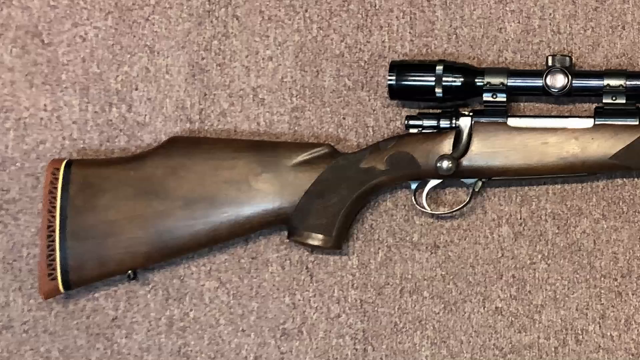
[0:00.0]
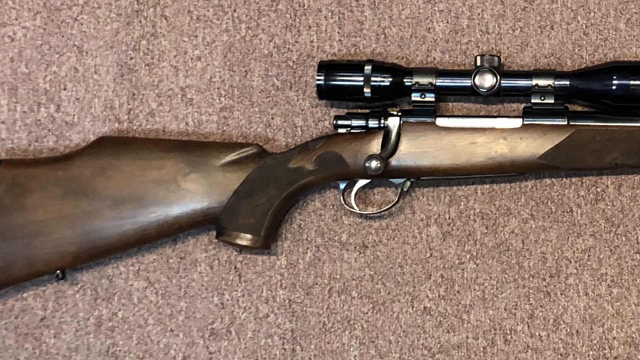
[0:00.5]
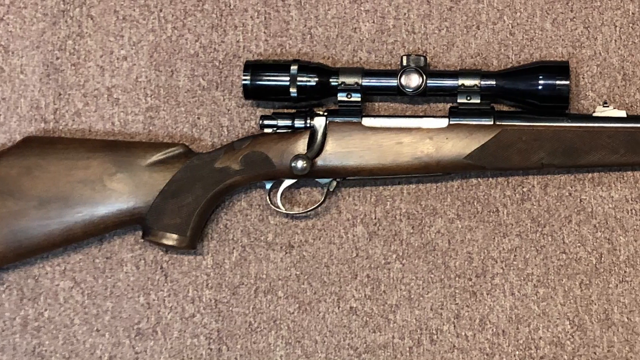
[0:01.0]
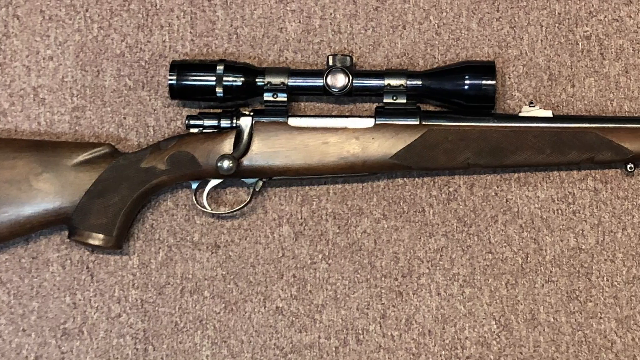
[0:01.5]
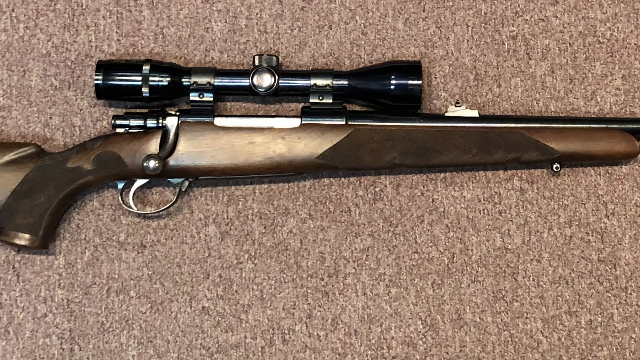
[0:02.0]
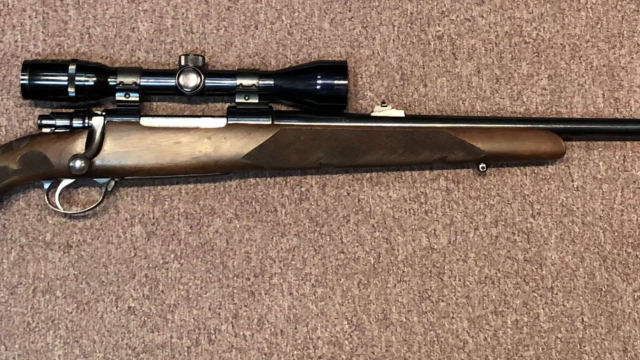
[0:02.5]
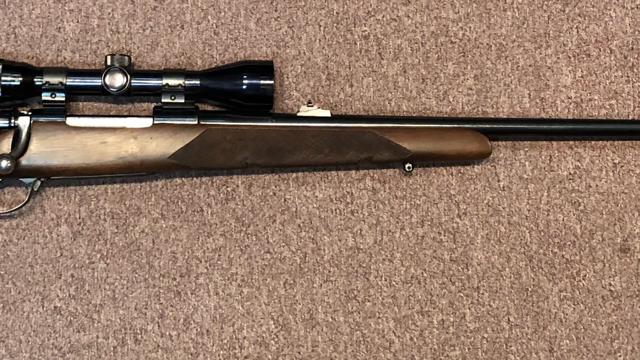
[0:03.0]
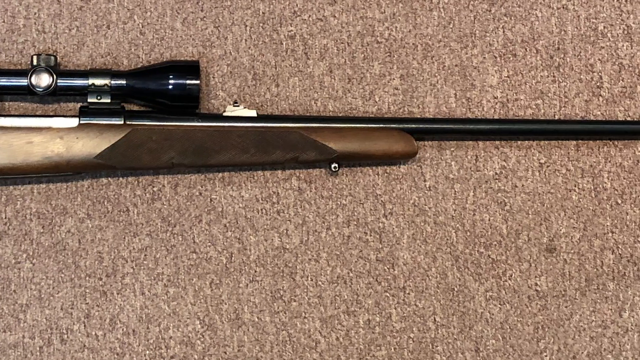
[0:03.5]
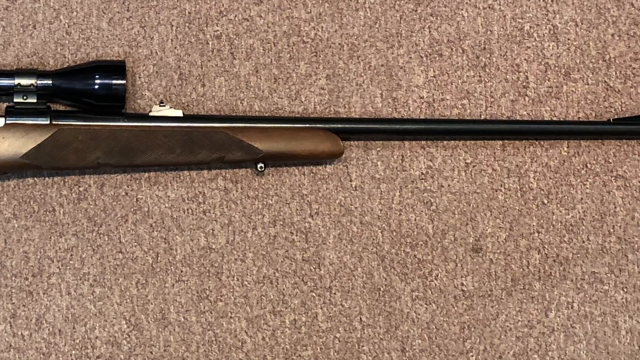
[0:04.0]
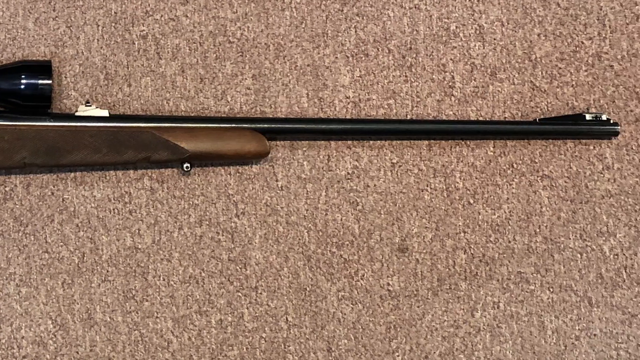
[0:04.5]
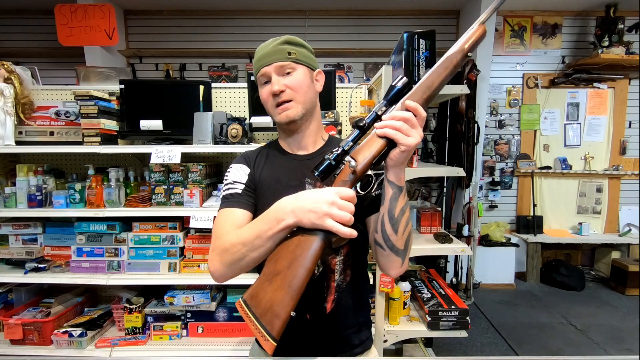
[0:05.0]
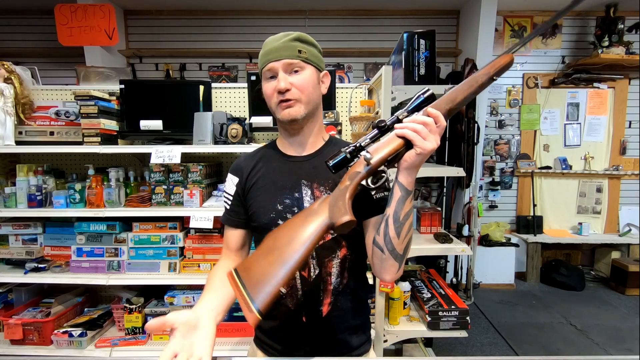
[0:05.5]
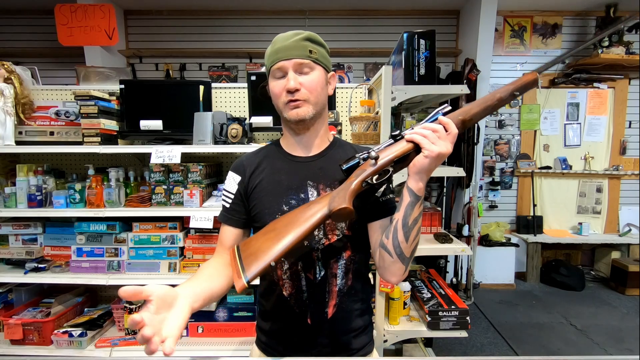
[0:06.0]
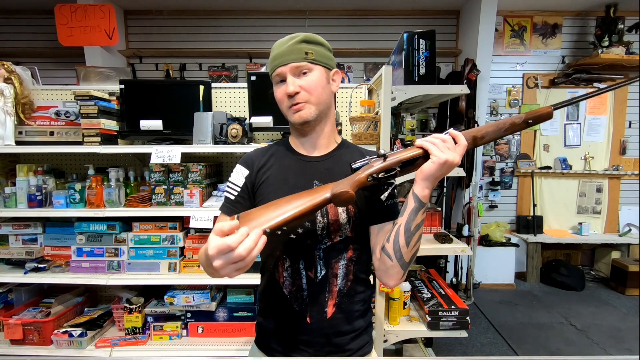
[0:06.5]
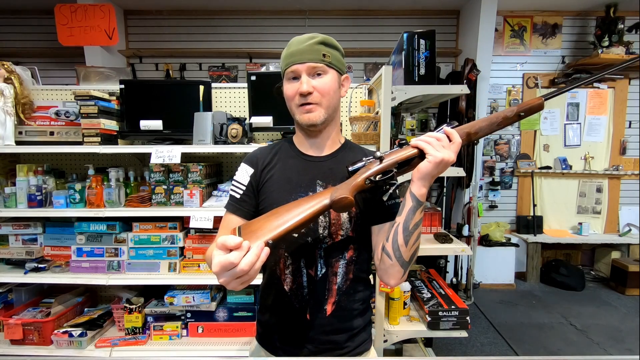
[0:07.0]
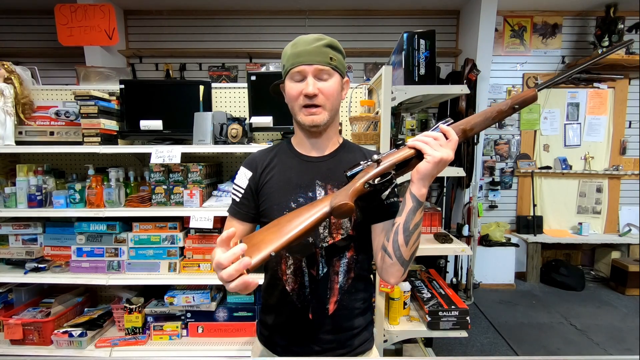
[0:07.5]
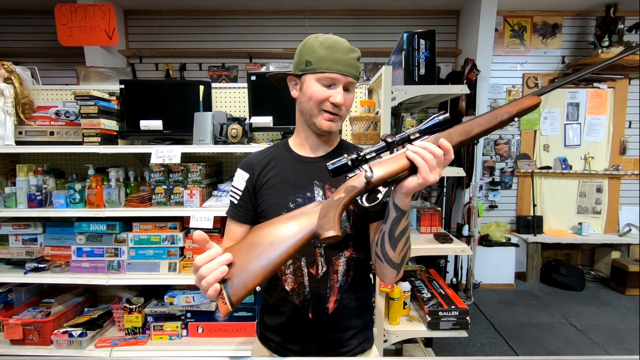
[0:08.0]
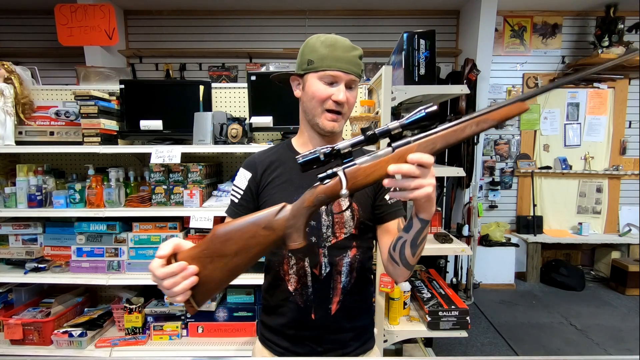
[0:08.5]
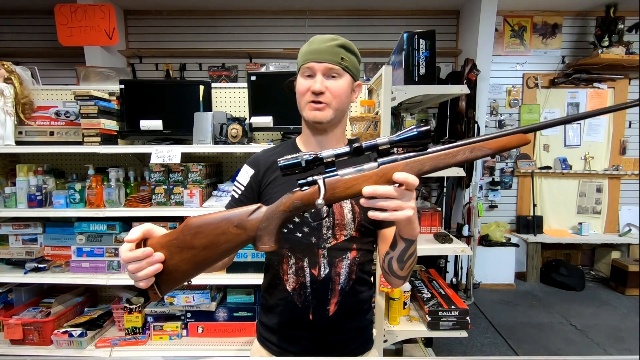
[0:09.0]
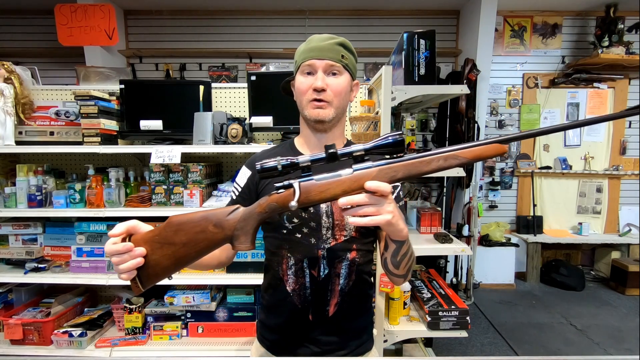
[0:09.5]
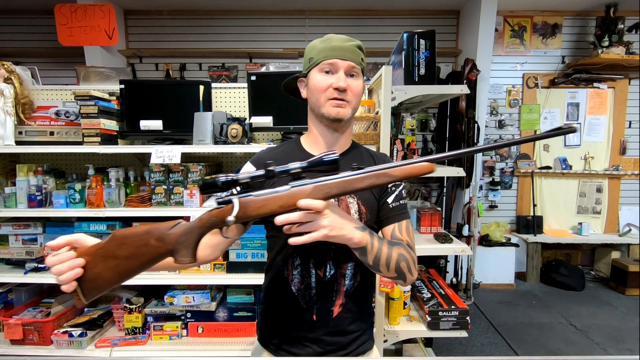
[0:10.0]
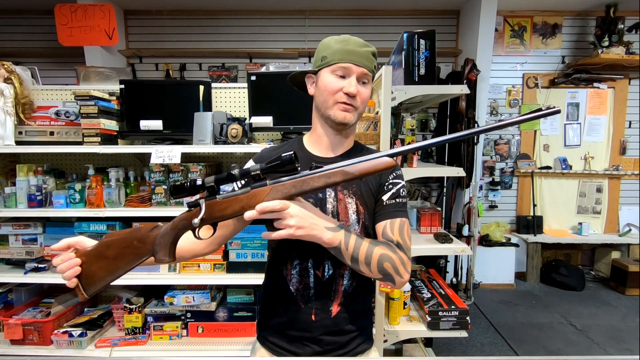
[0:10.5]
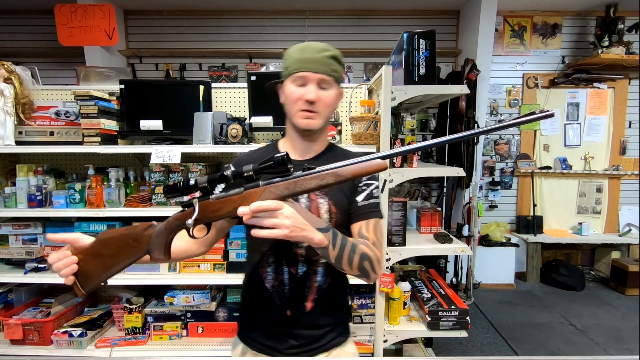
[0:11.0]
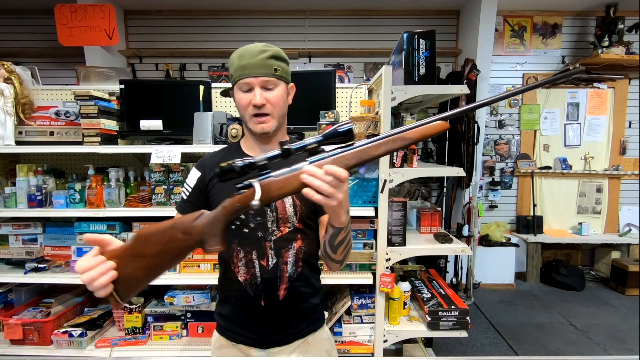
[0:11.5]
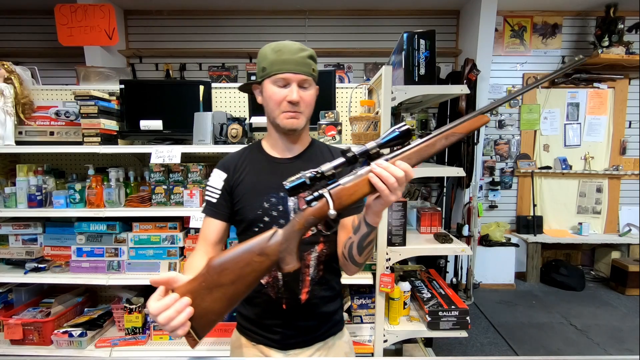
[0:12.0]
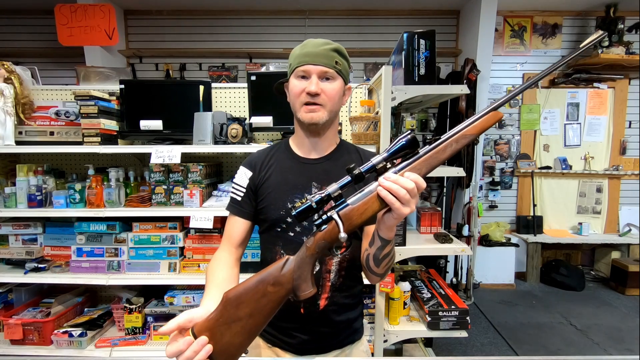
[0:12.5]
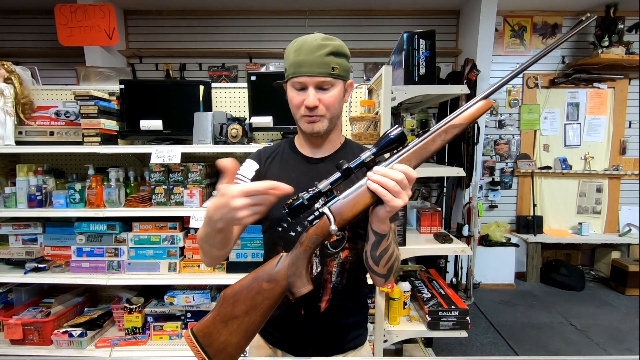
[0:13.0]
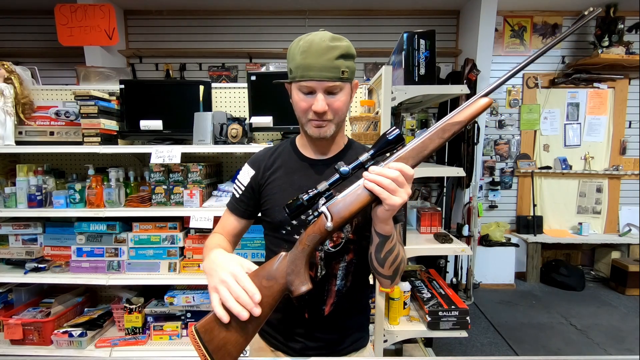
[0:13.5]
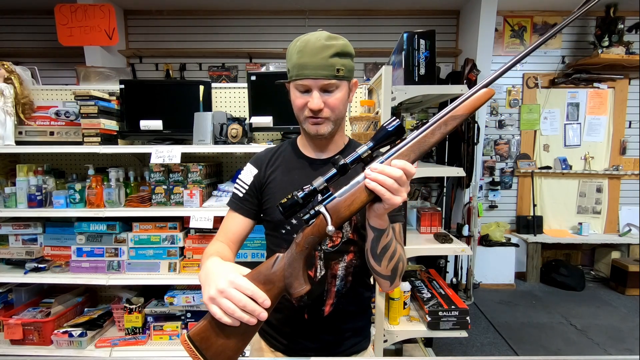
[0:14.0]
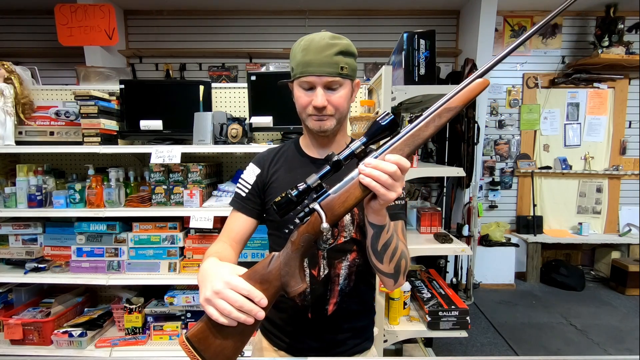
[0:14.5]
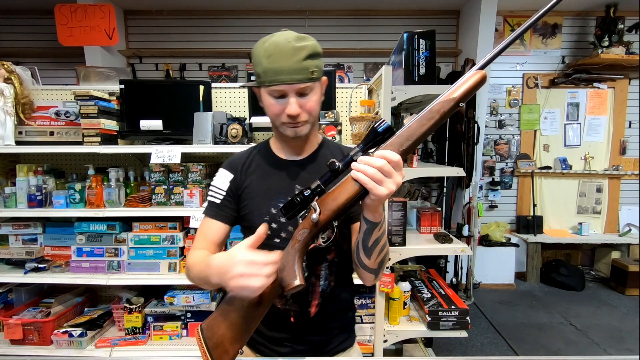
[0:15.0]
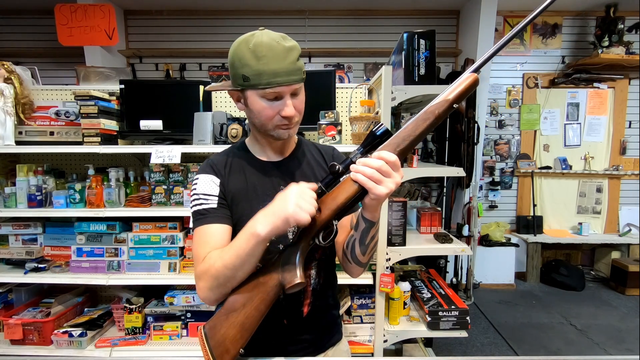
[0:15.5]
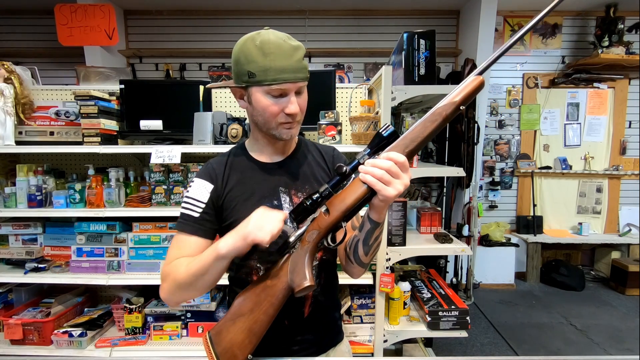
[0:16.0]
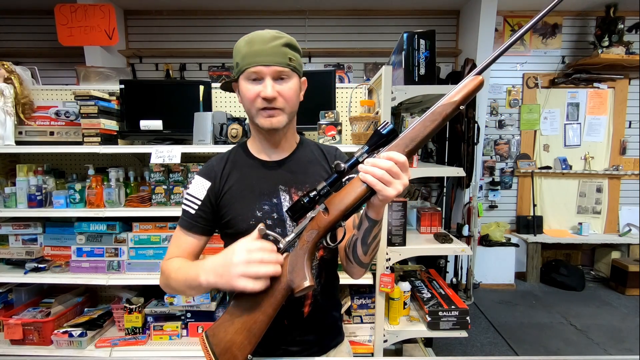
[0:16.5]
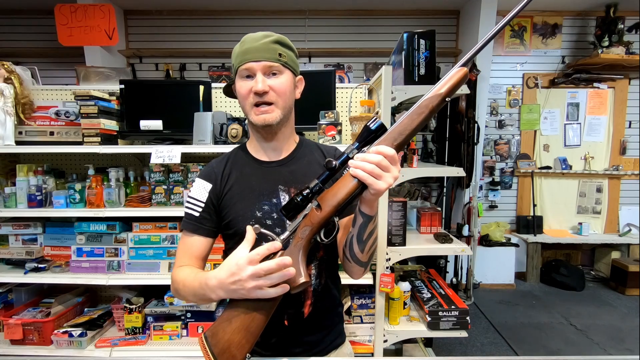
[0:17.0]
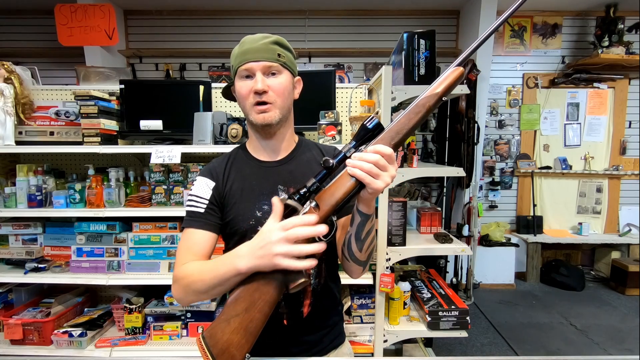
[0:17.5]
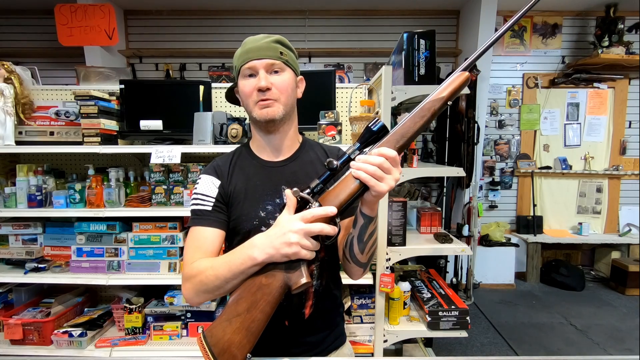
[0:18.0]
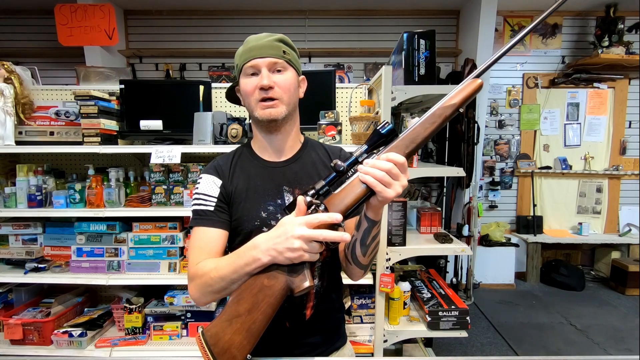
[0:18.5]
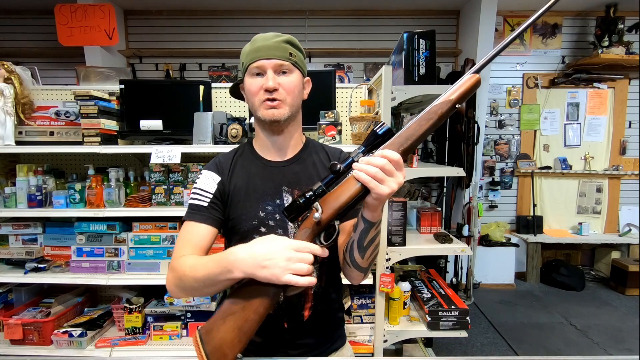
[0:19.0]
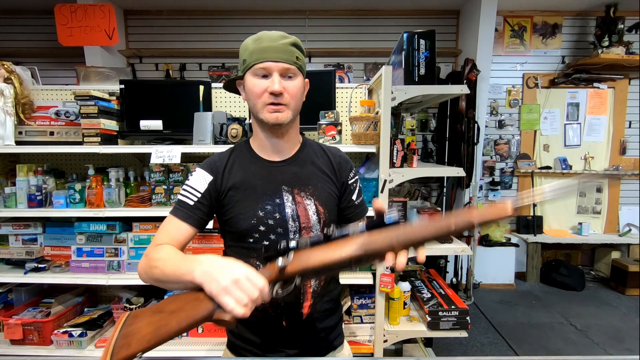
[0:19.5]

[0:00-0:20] A close-up shows a gun, starting at the back of the gun; the trigger is visible but the barrel is not. It looks like a vintage weapon of some kind, with a clean, polished finish as though it has been well looked after. The view travels along the gun, showing the middle section, and the camera slowly pans towards the end of the section. The image quickly cuts to a man holding the gun. He has the front of the gun in his left hand and his right arm over the gun, with his index finger near the trigger. He wears a green cap and a black t-shirt, and his left arm is tattooed with a modern design. Behind him are cluttered shelves, as though he is standing in a store, with a number of items on them: what appear to be jigsaw puzzles are stacked on one shelf, and above that are items including hand wash. To his right and slightly behind are more shelves that are less full. The man lifts his right arm off the gun and talks towards the camera.